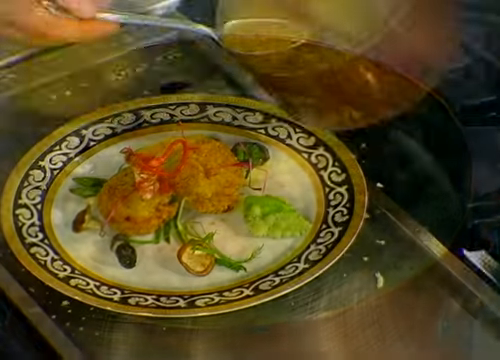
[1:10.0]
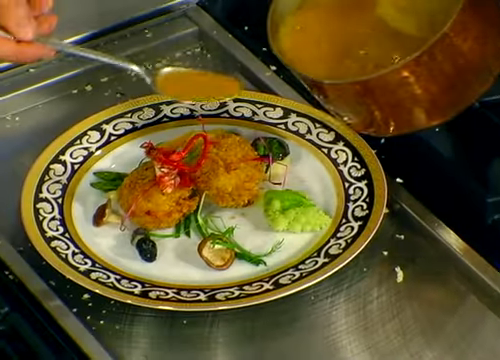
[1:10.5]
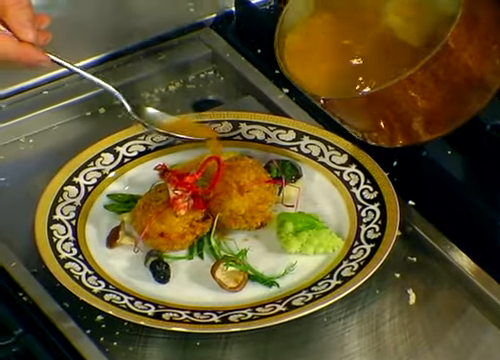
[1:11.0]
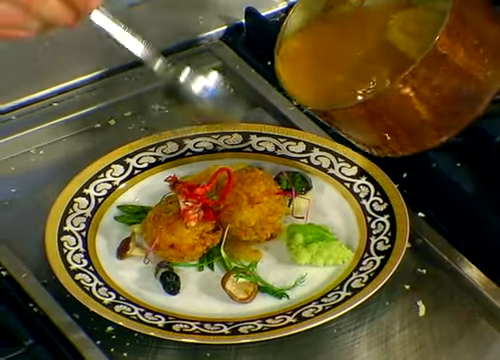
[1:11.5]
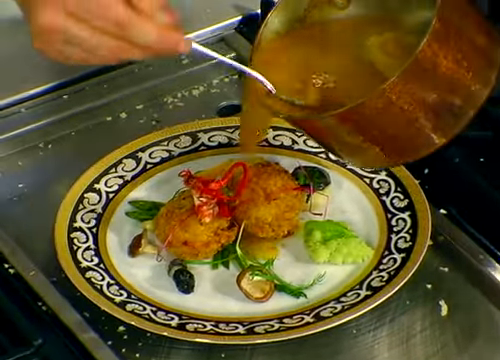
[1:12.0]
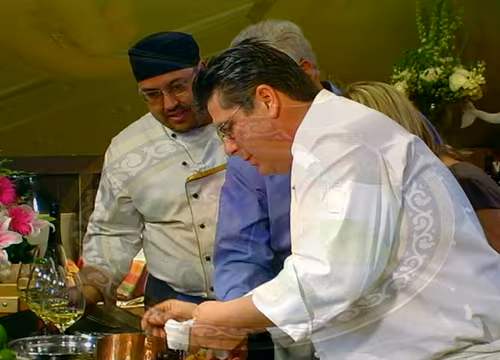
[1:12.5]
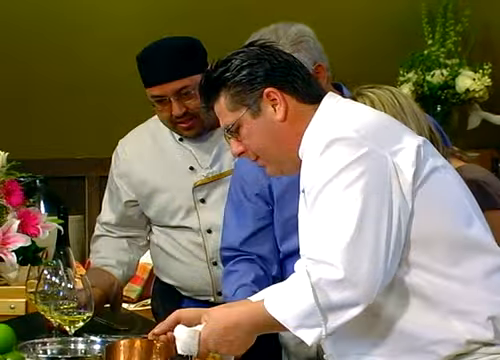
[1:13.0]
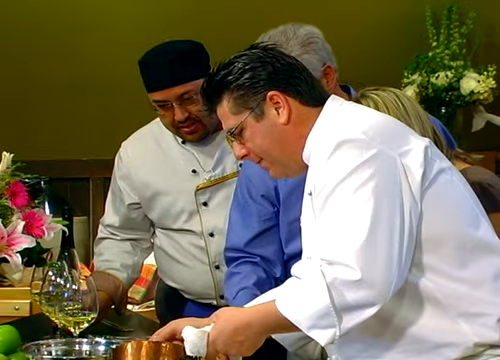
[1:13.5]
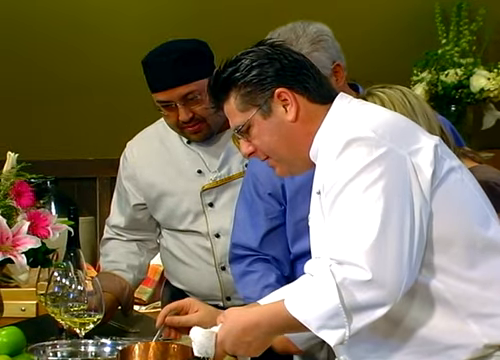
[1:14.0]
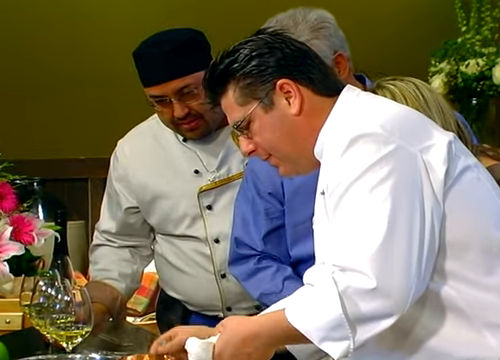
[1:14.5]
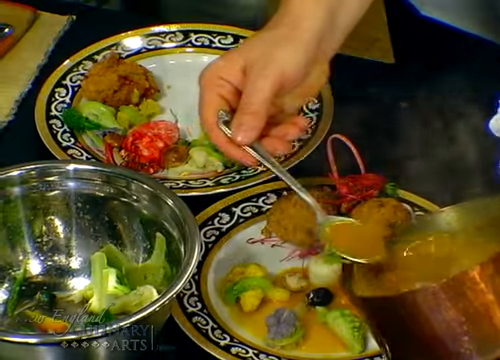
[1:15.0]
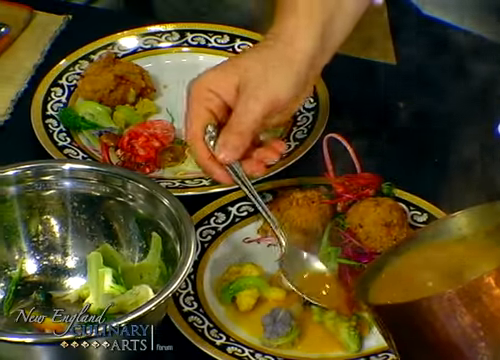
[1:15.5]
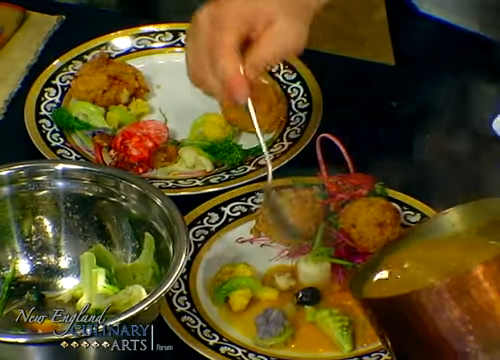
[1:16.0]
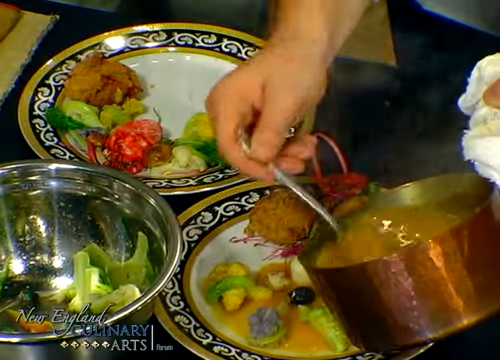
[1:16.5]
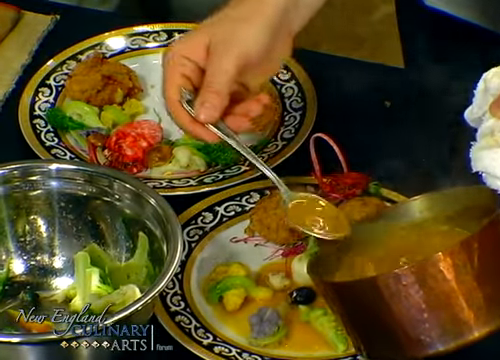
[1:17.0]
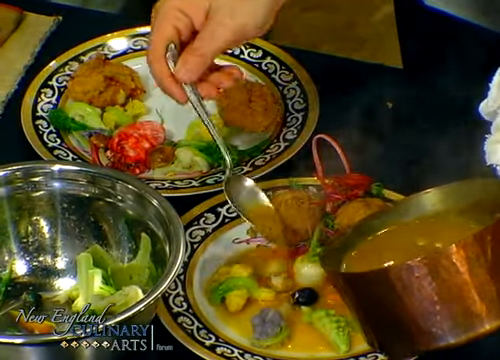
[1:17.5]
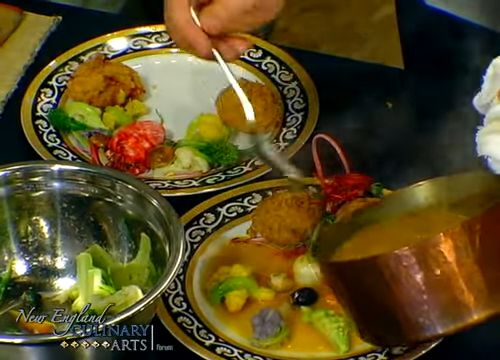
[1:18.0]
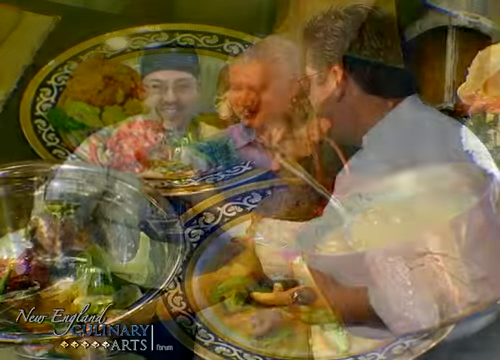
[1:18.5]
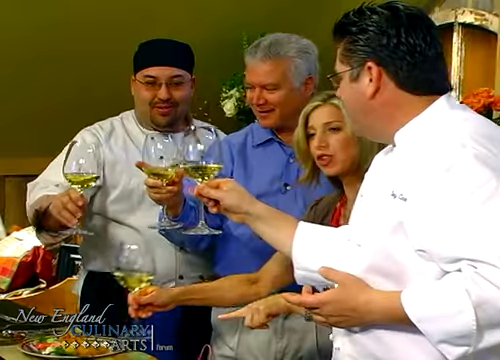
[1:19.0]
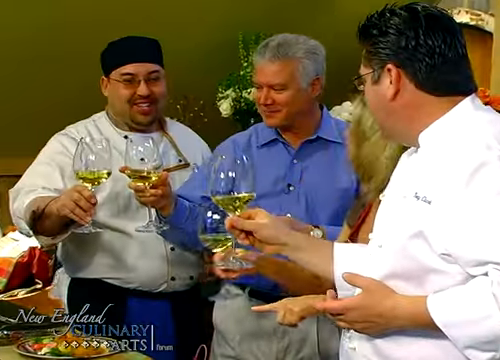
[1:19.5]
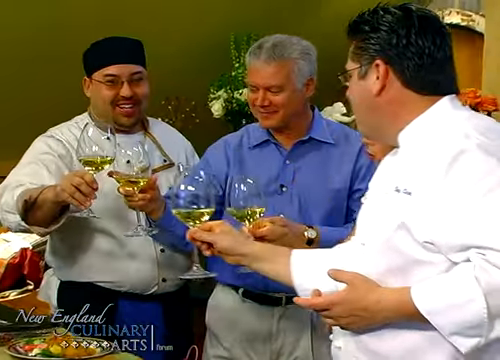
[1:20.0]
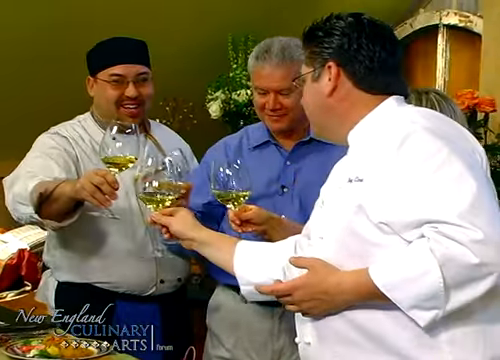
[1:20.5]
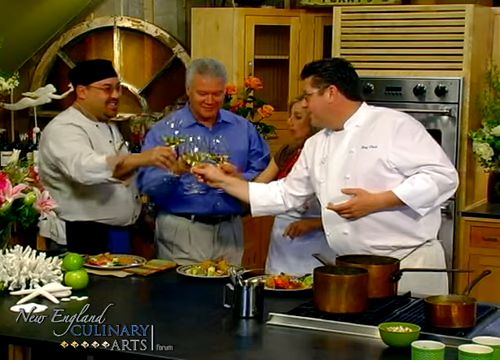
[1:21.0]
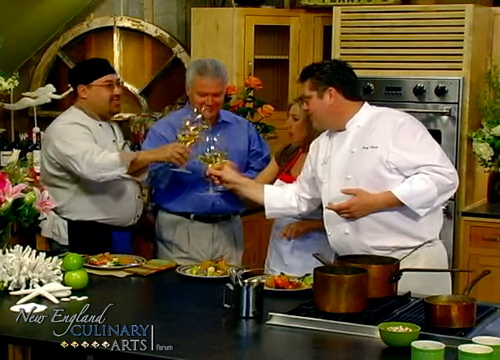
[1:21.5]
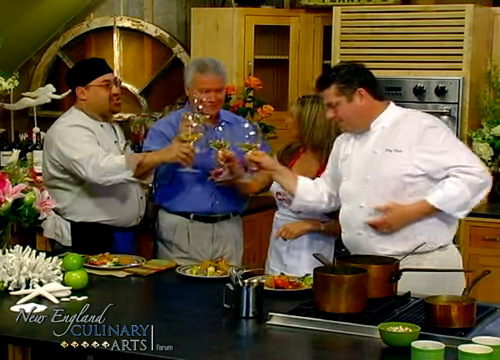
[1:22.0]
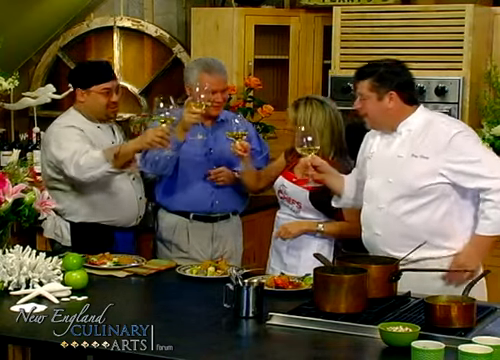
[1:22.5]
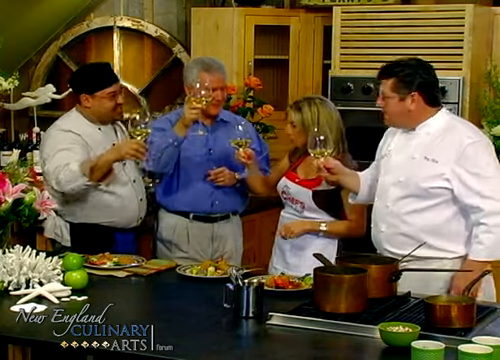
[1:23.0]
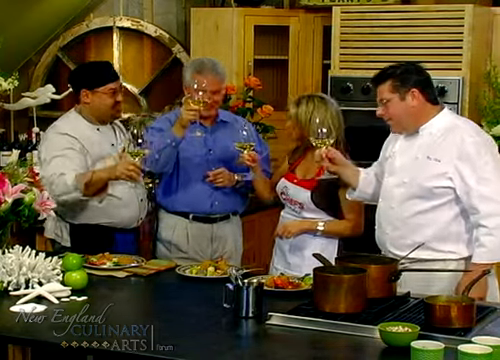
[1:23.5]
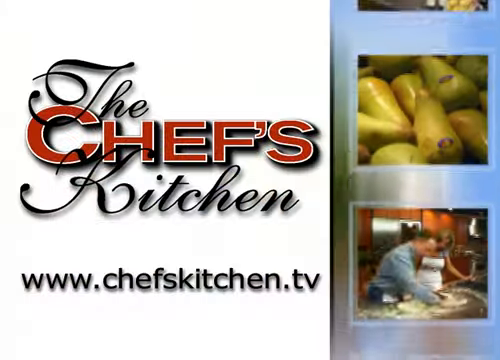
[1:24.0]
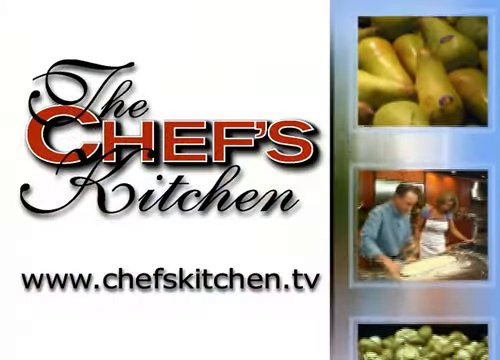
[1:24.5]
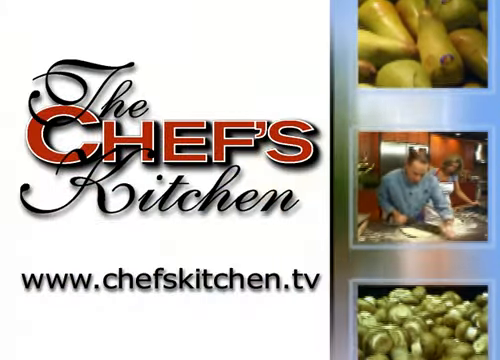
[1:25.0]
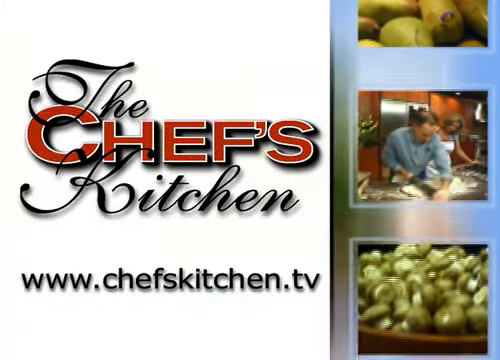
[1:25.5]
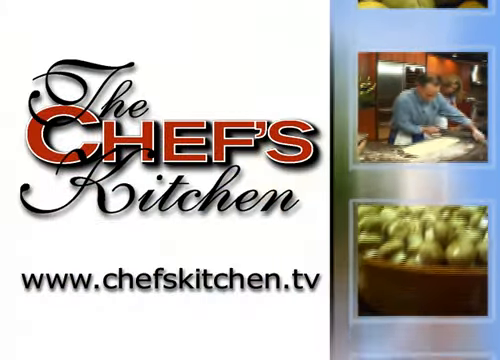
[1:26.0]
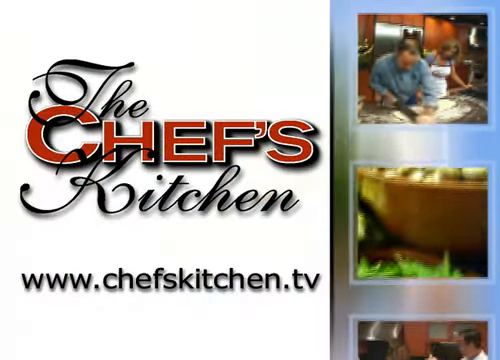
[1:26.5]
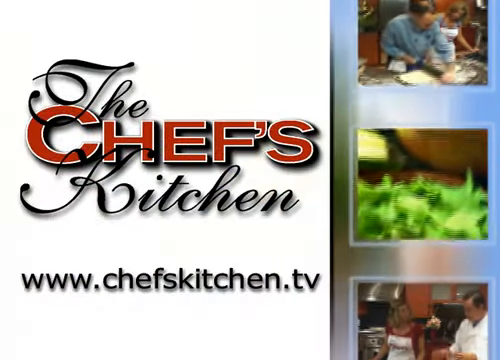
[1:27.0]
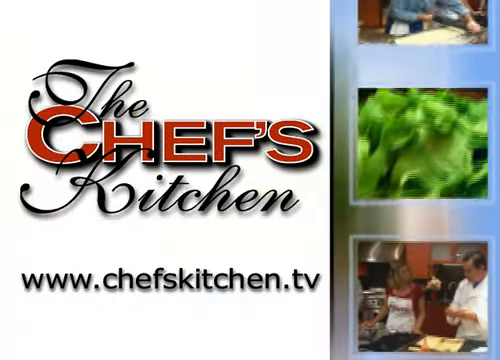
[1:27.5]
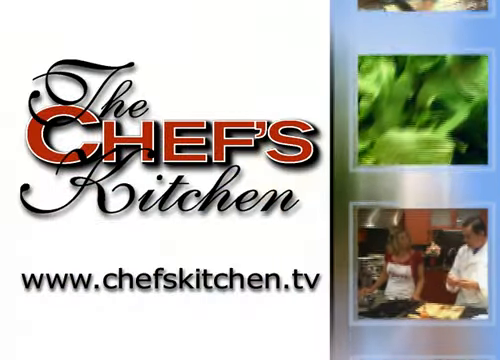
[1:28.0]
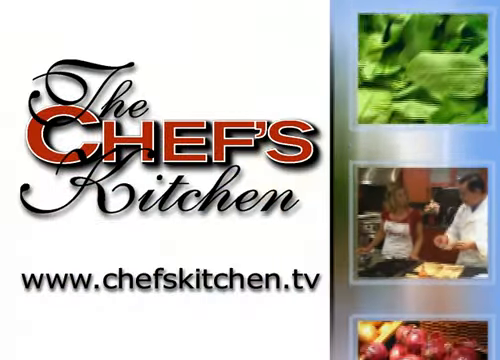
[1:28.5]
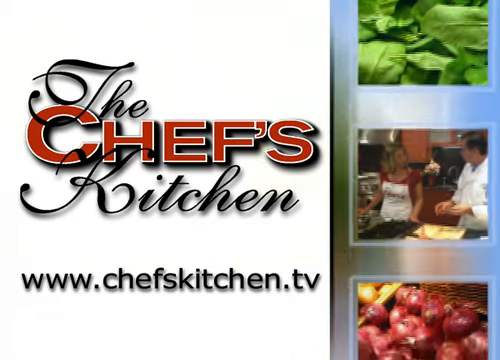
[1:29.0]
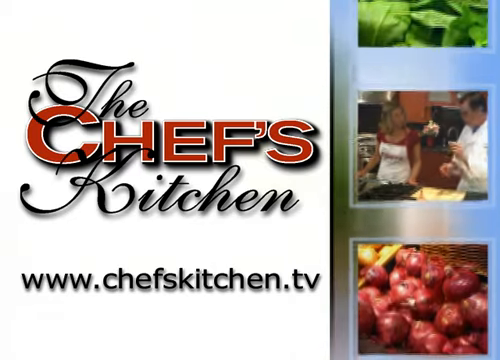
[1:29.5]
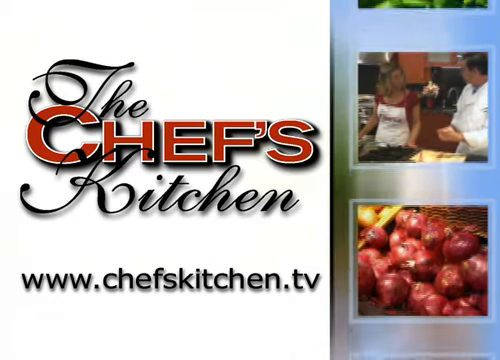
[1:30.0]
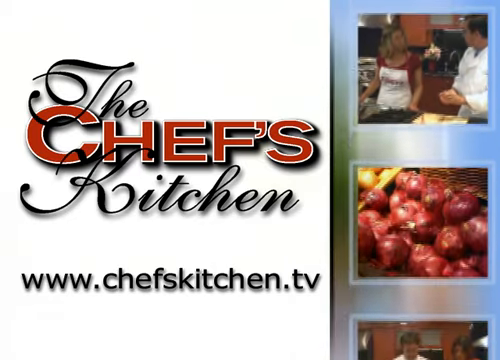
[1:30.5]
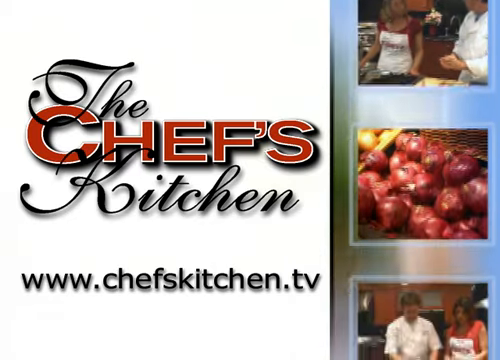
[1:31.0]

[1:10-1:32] Lobster balls are on a plate with some kind of garnish, looking like maybe spinach, radishes and greens forming a ring of some kind, with a little black thing on it. The plate has gold rings and is blue with an intricate white design all over it. The chef spoons a very liquidy mixture out of a red pot with a silver spoon and sprinkles it over the top. The other chef in the black hat looks on, as do the other two people. There are several plates, as he is making more than one. A stainless steel bowl holds what appears to be broccoli or something similar. He spoons the mixture all over the food and sprinkles it over everything. Then all four hold glasses of wine, the wine moving around in them, and they make a toast, clinking glasses together. At the end, text reads "the chef's kitchen" with "www.chefskitchentv," and the screen moves up and down the side with pictures of onions and such.